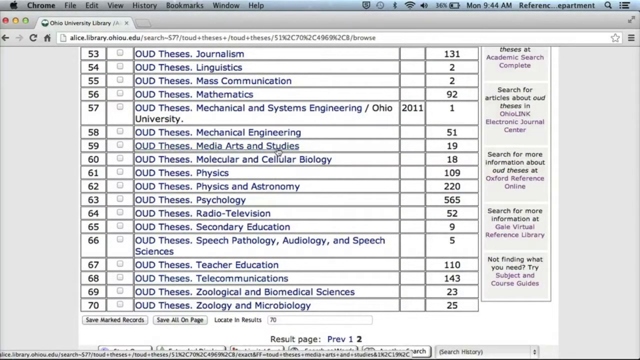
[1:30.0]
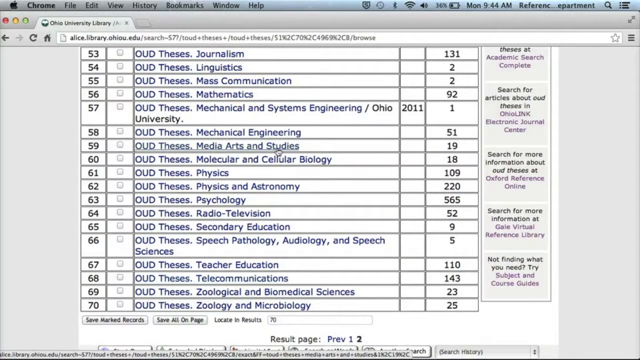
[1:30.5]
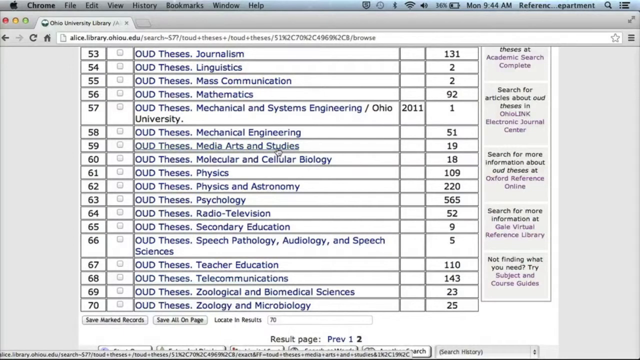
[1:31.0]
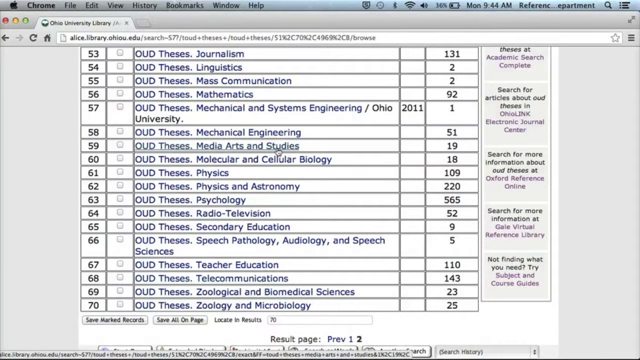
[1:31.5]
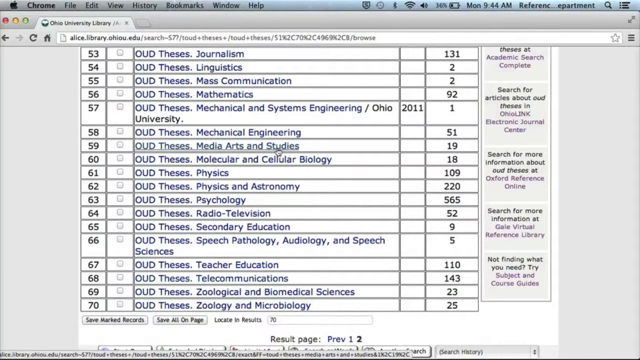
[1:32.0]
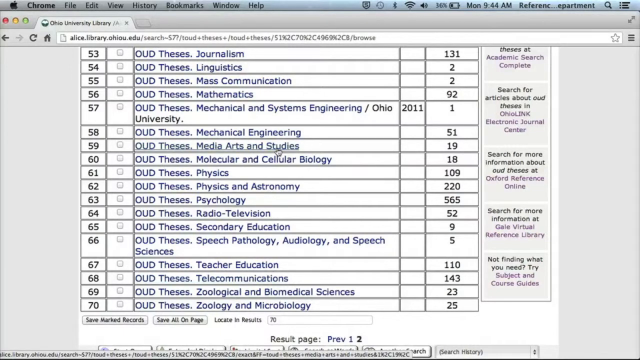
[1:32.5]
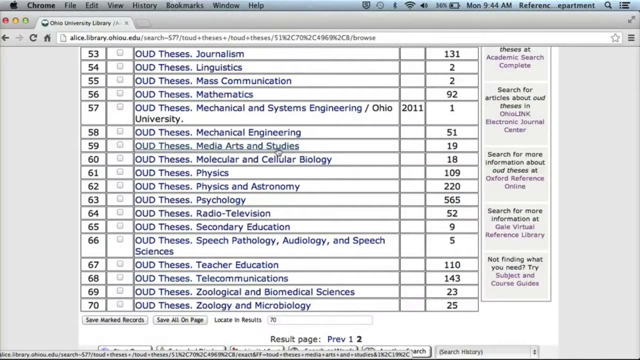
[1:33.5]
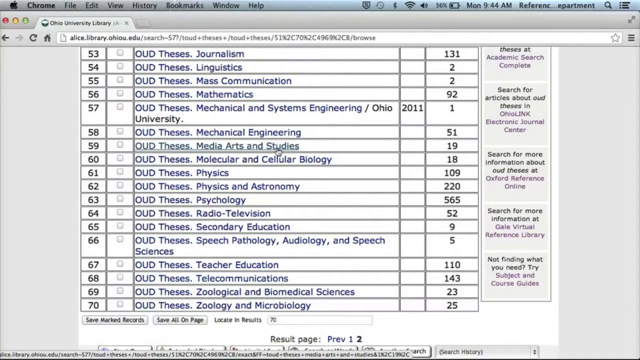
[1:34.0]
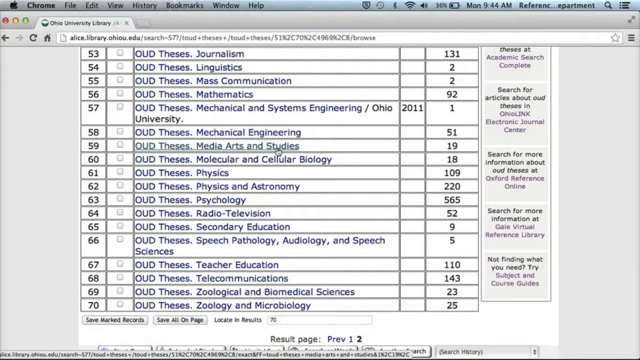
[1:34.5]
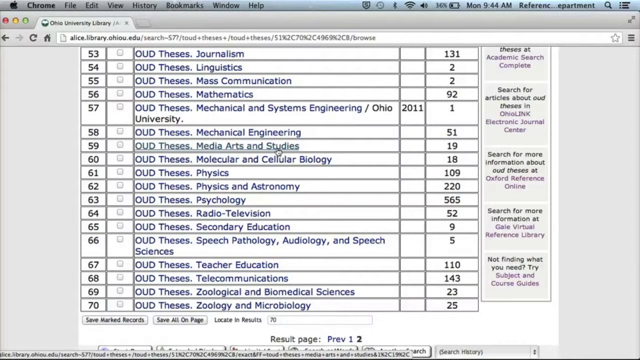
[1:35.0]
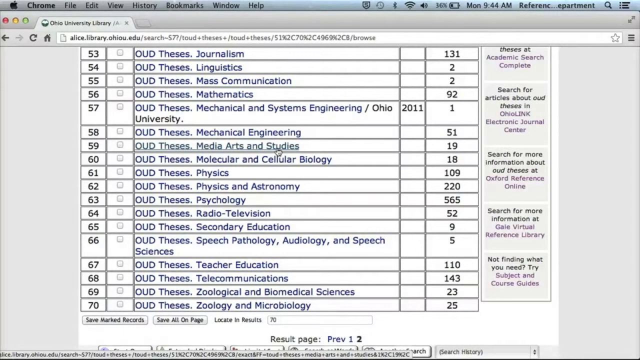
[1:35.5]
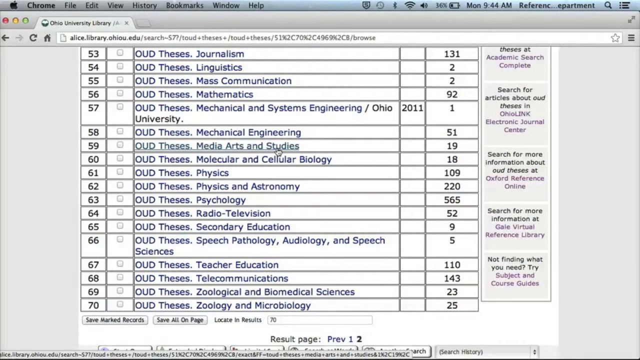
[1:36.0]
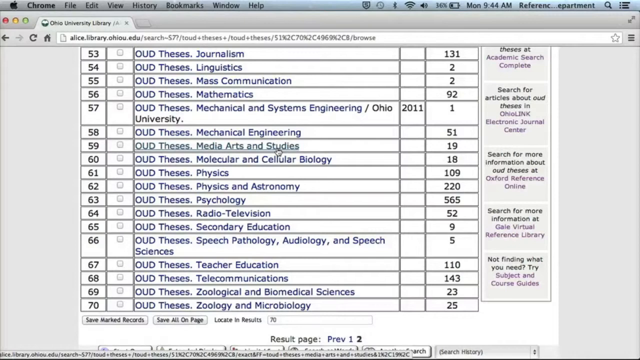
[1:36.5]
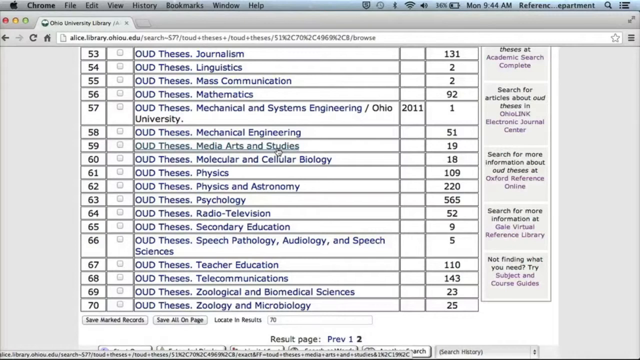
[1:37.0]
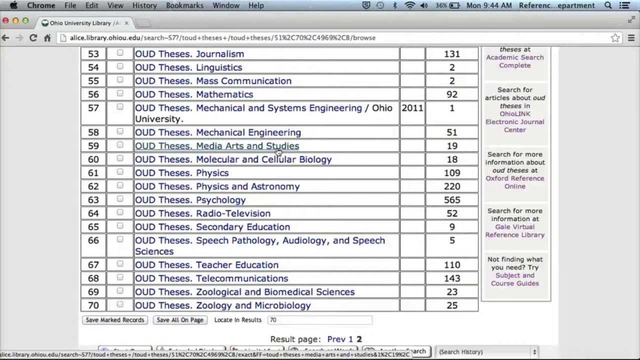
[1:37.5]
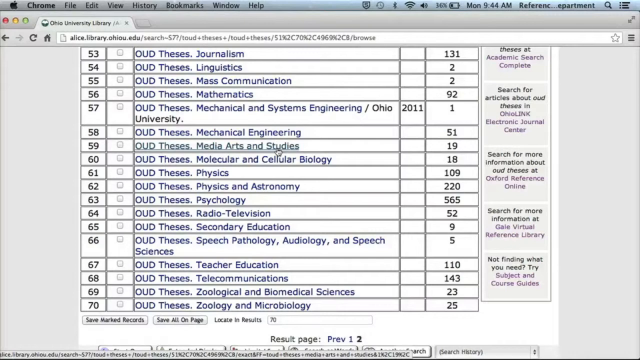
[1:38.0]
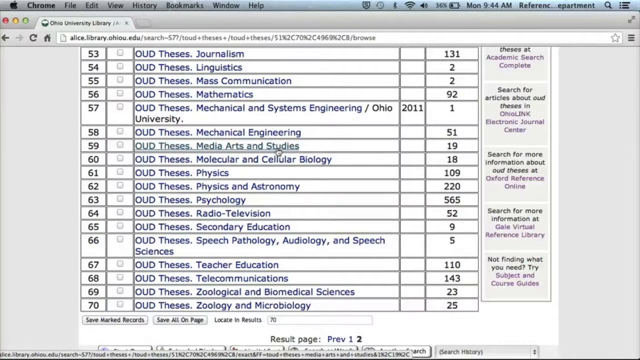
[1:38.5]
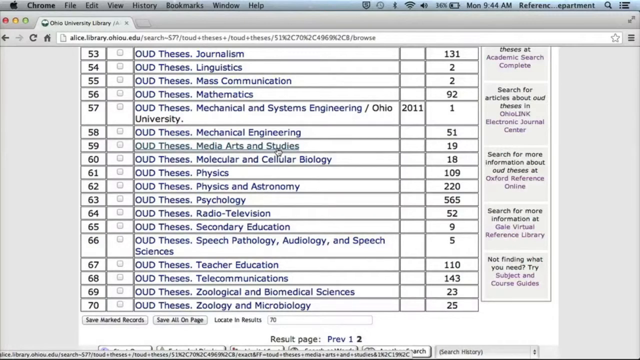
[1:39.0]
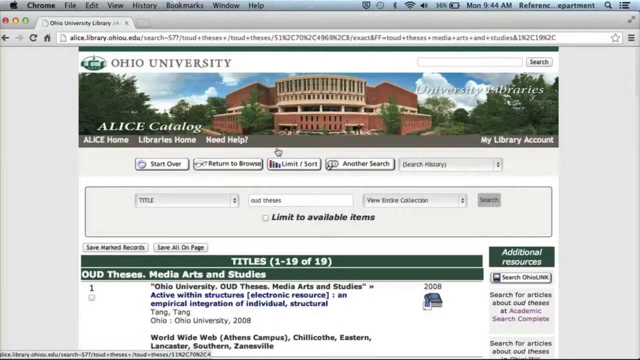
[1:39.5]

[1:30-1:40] The mouse hovers over the title on line 59, "OUD Theses, Media Arts, and Studies." When the link is clicked, it turns a different shade of blue, more of a bluish green than the original blue. The click appears to lead to a new webpage with a table showing titles 1 through 19. The table has a dark green heading row and white remaining rows.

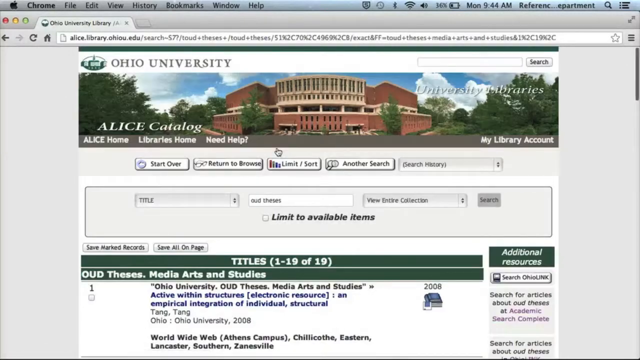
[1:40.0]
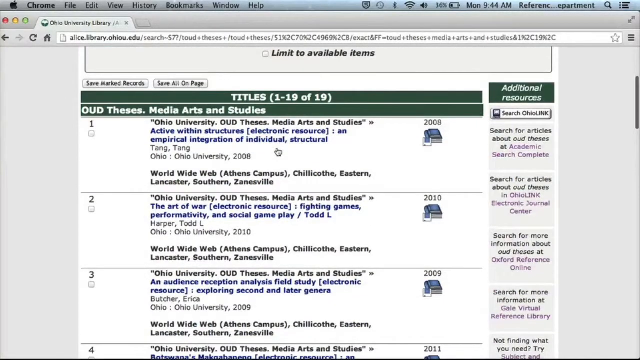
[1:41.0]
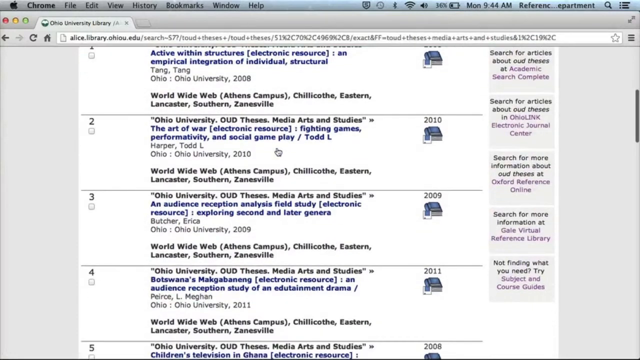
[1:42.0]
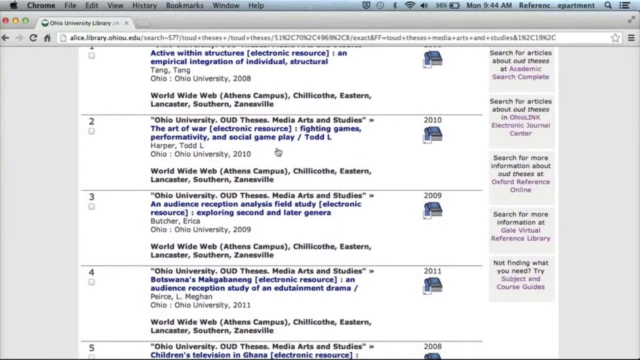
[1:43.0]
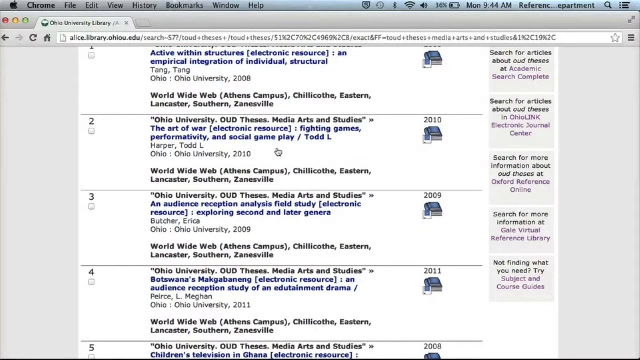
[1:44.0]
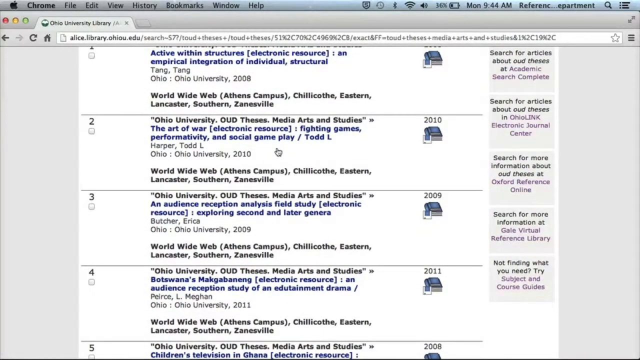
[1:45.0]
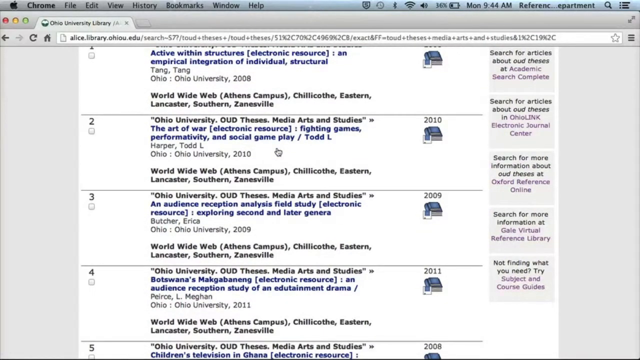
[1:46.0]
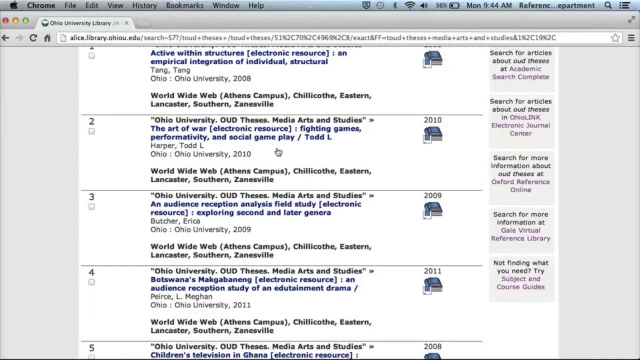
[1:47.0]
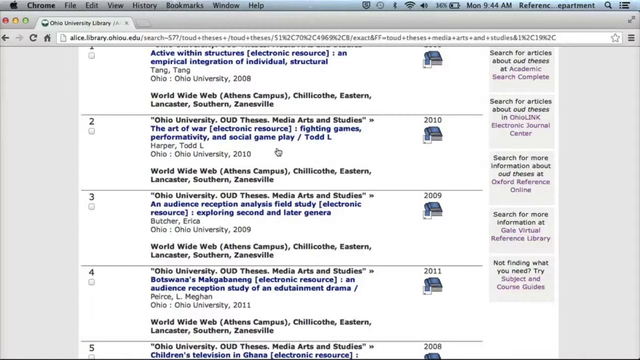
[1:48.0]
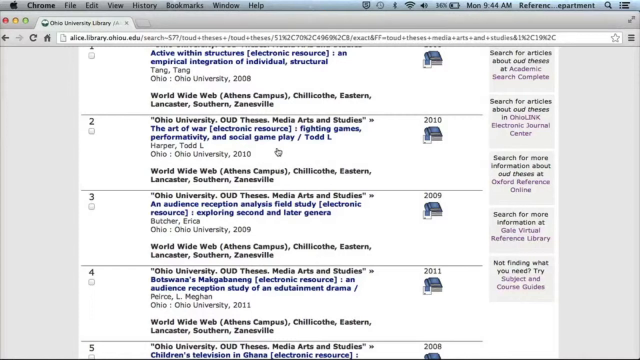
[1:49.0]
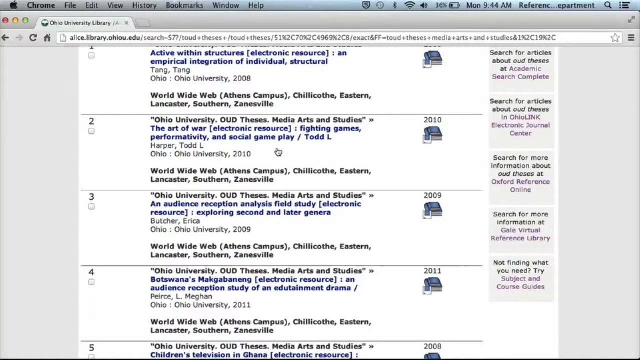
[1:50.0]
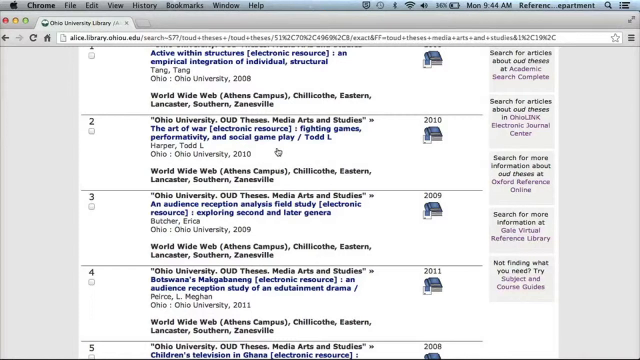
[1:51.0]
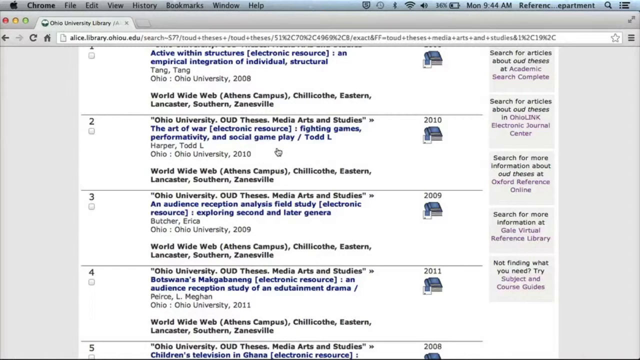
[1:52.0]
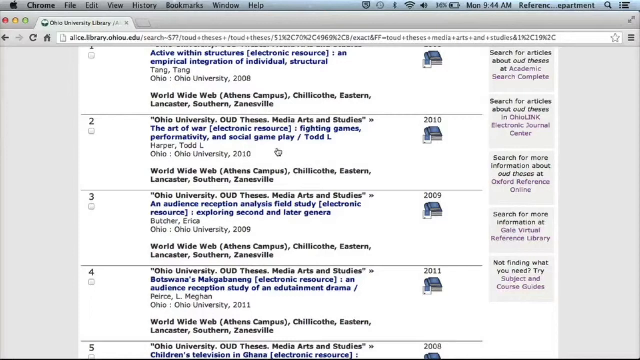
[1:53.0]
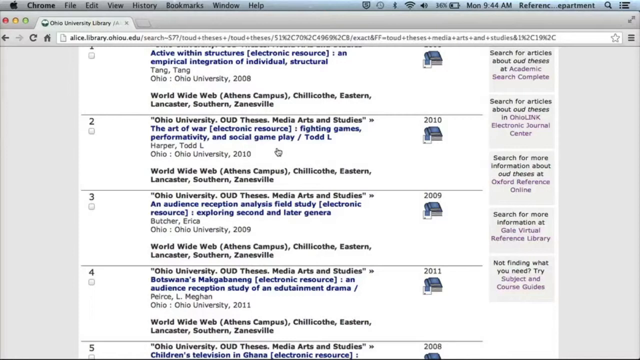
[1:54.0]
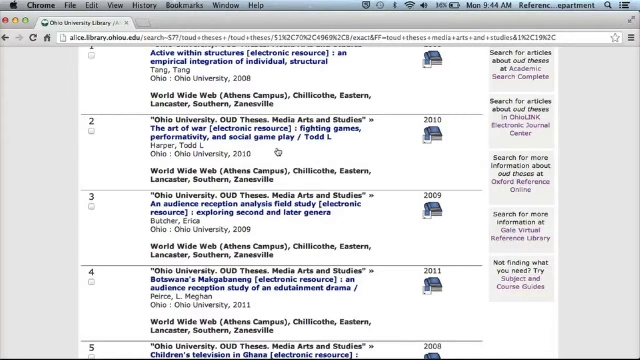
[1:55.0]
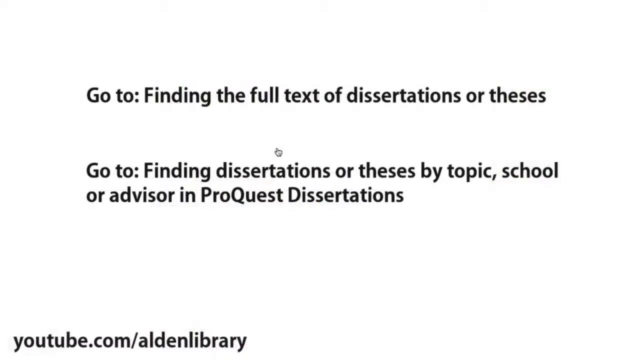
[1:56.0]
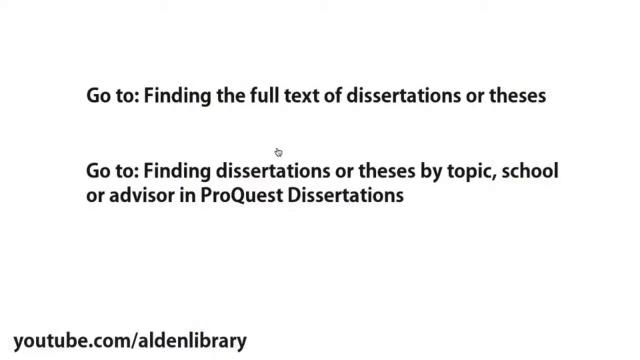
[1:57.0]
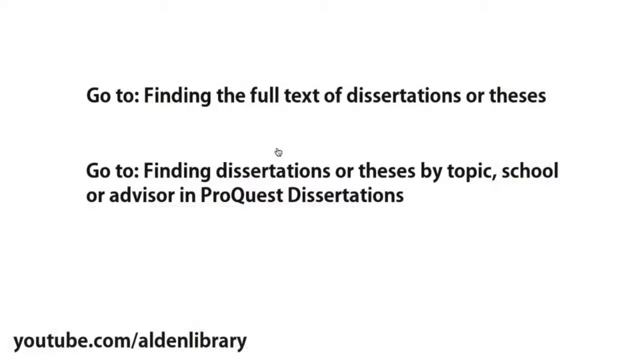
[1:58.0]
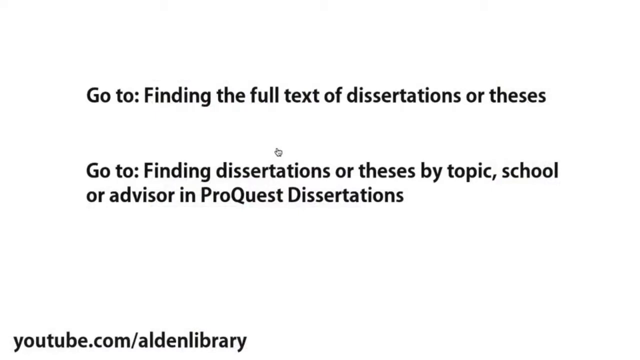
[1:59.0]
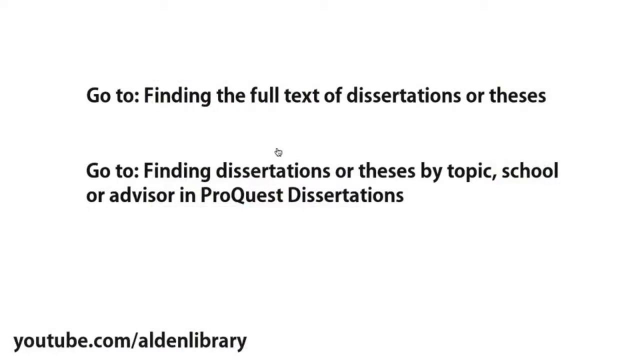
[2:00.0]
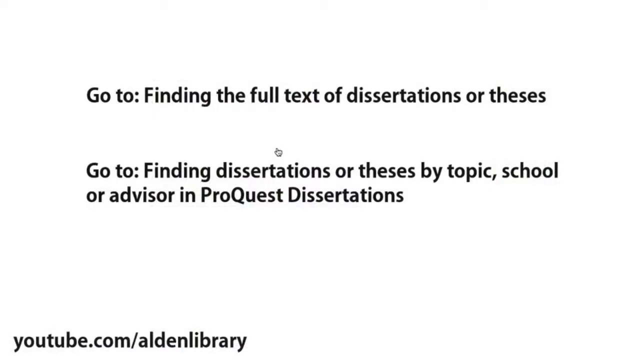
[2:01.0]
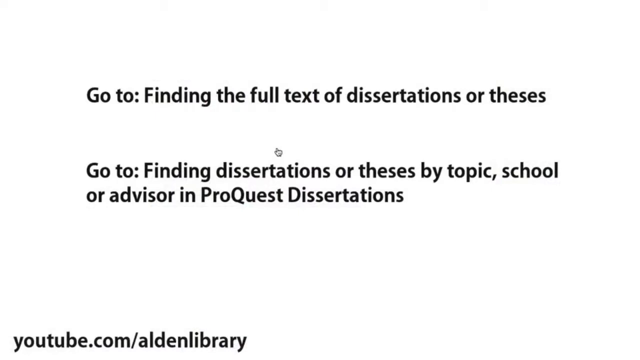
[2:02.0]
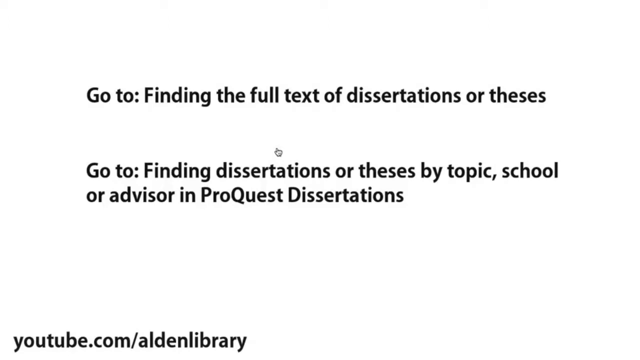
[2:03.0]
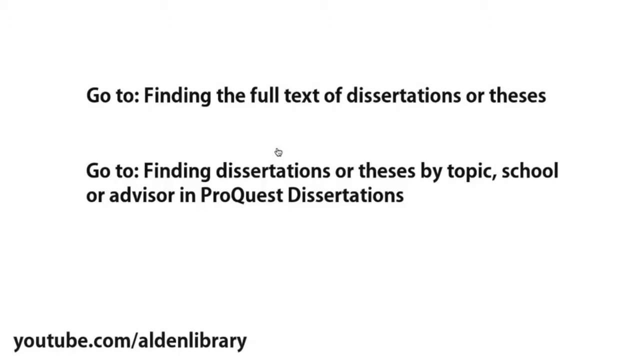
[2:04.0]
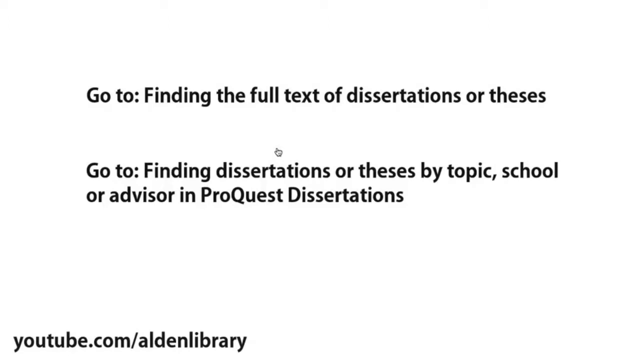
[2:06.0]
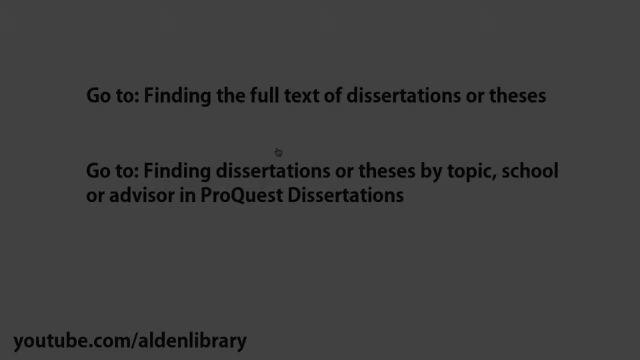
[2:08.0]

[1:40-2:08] The page scrolls down to show the titles in the table. The scrolling stops with the mouse apparently in row two, where it remains static on white space. The display then seems to fade out and is replaced by a white background with black text reading "go to: finding the full text of dissertations or theses." About two line spaces below, it reads "go to: finding dissertations or theses by topic school or advisor in ProQuest dissertations." The bottom of the display appears to have a dark shadow that is darkest at the bottom and seems to fade slowly as it goes up. At the end, the screen fades to black.